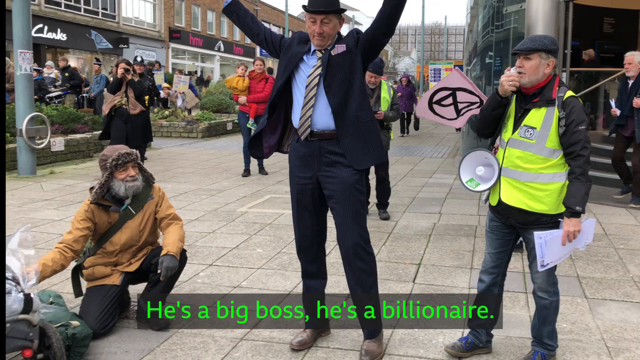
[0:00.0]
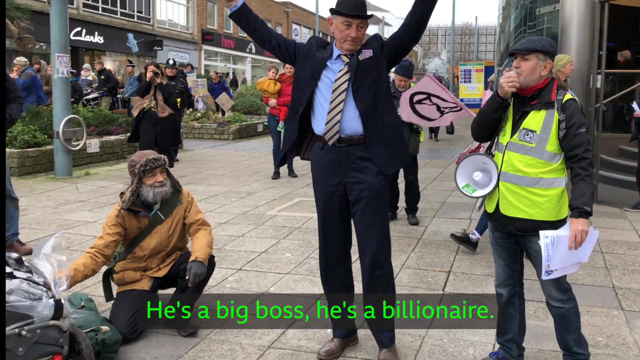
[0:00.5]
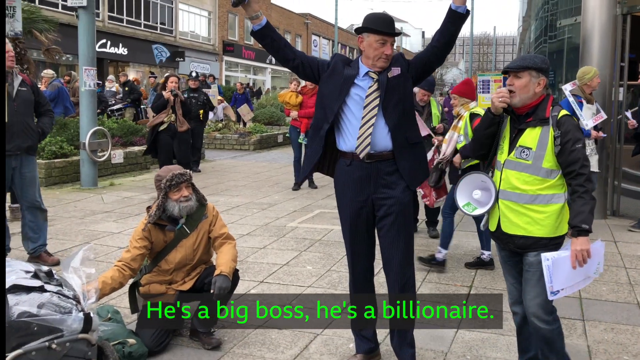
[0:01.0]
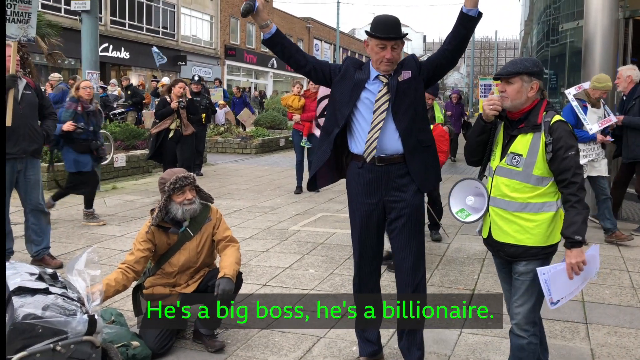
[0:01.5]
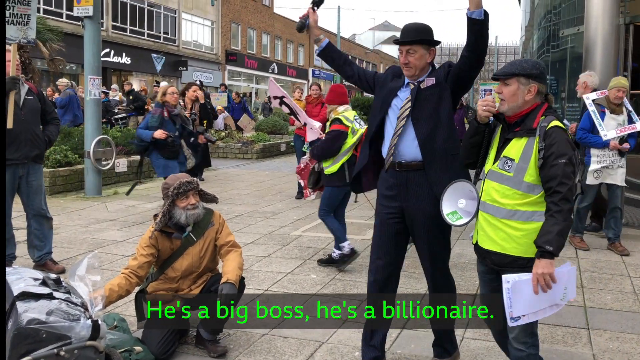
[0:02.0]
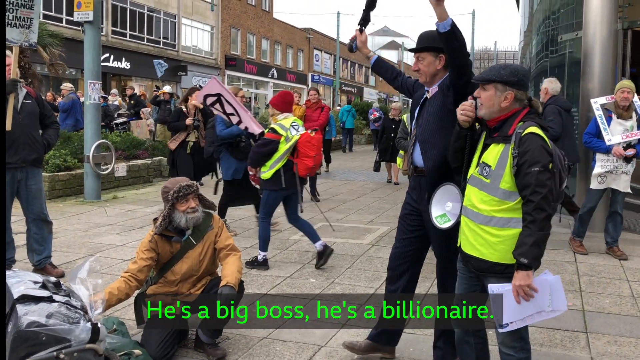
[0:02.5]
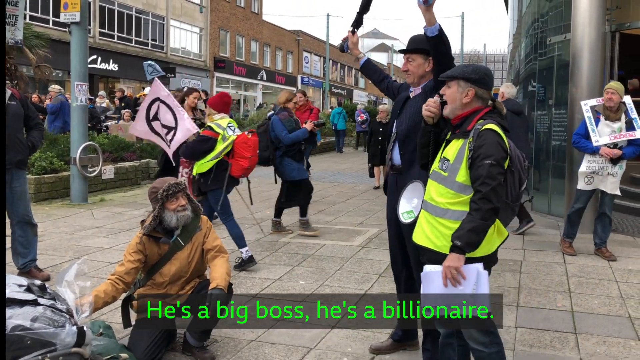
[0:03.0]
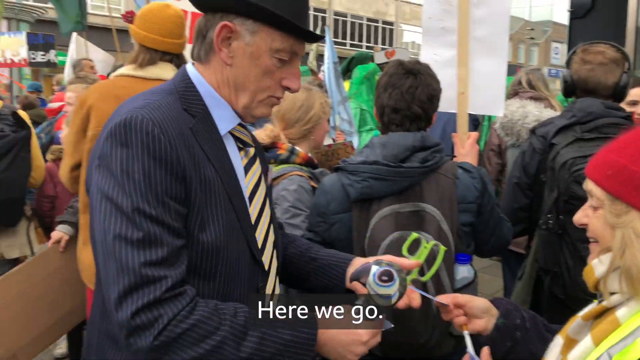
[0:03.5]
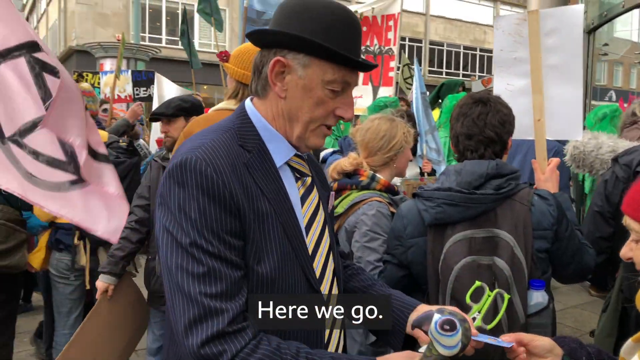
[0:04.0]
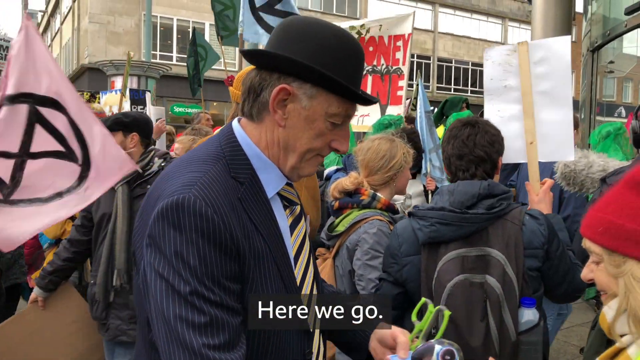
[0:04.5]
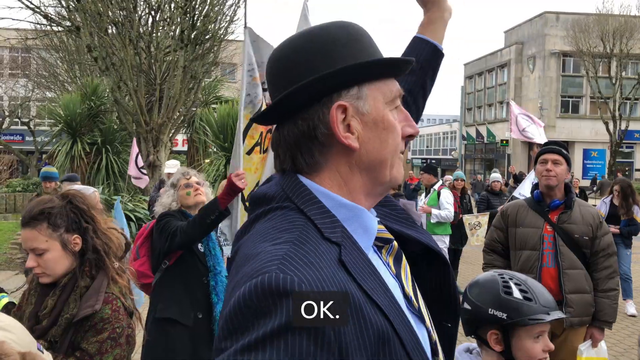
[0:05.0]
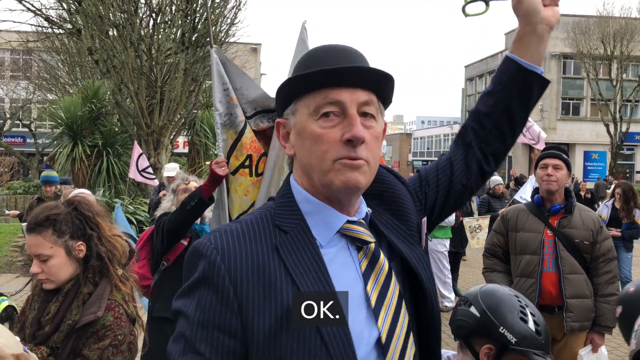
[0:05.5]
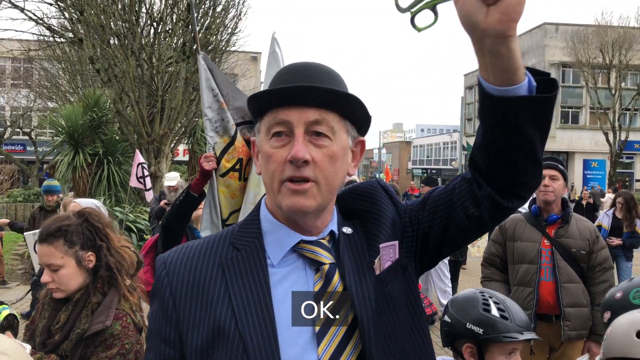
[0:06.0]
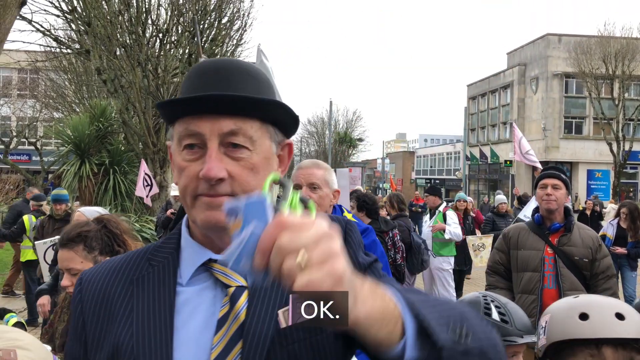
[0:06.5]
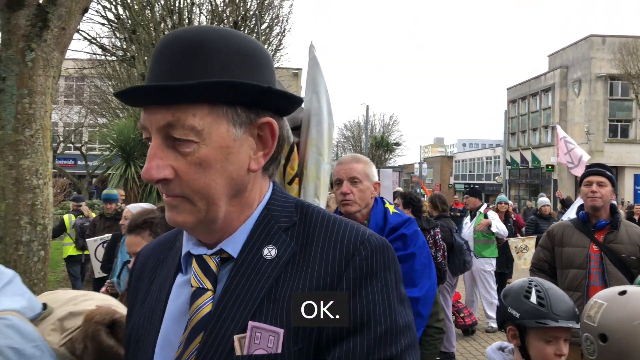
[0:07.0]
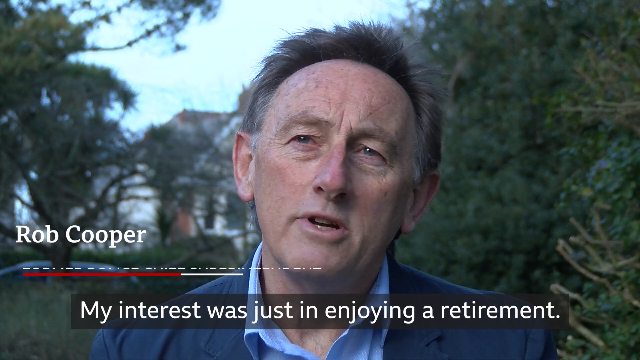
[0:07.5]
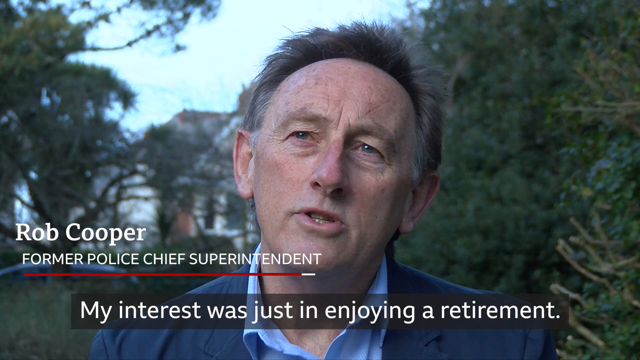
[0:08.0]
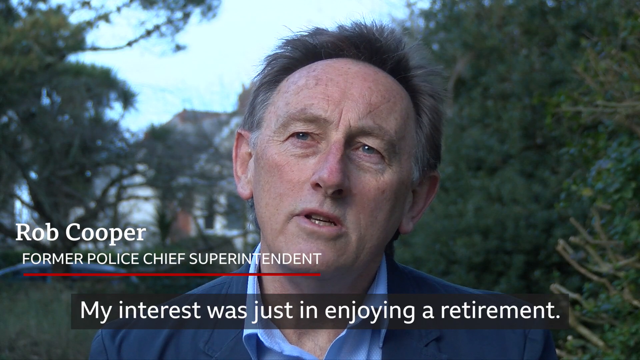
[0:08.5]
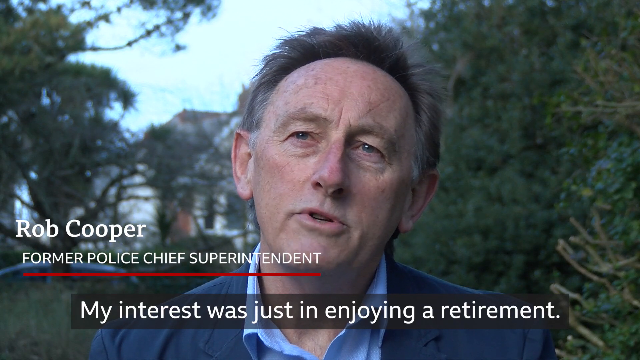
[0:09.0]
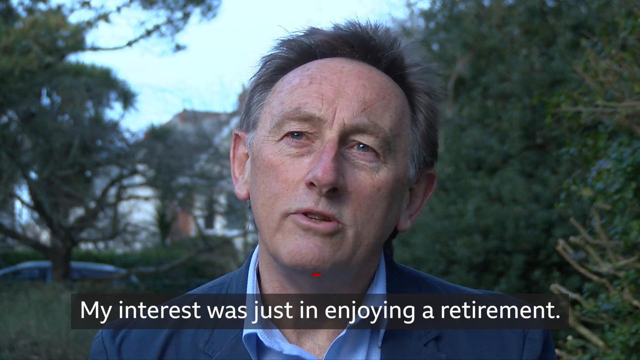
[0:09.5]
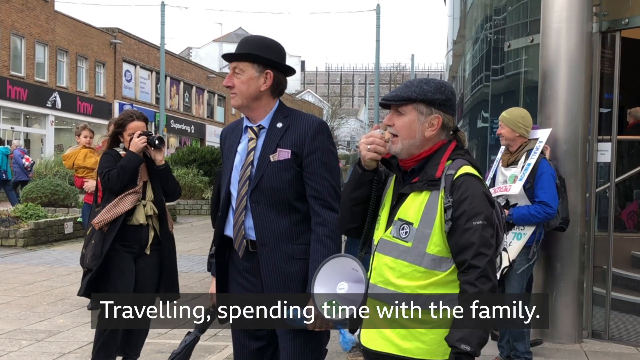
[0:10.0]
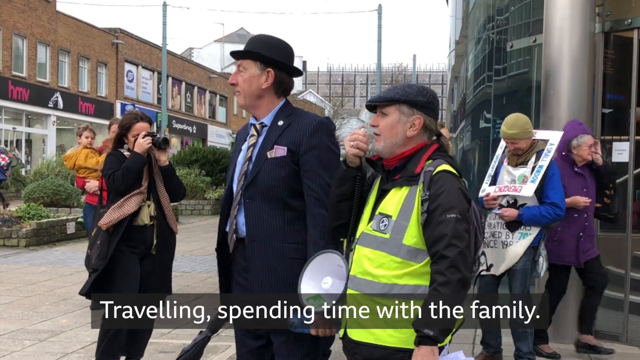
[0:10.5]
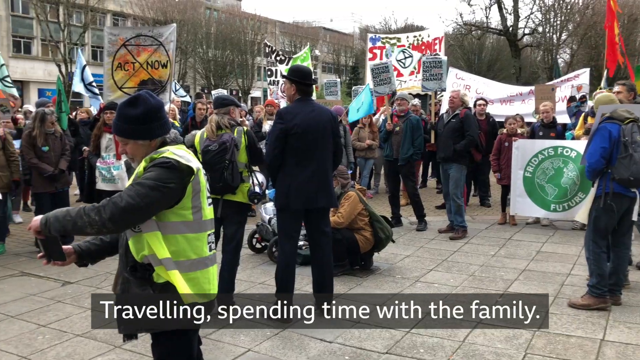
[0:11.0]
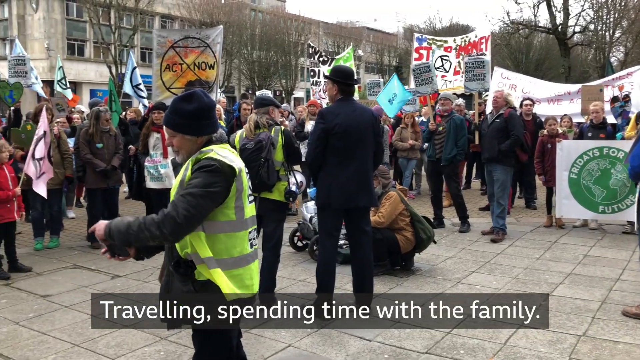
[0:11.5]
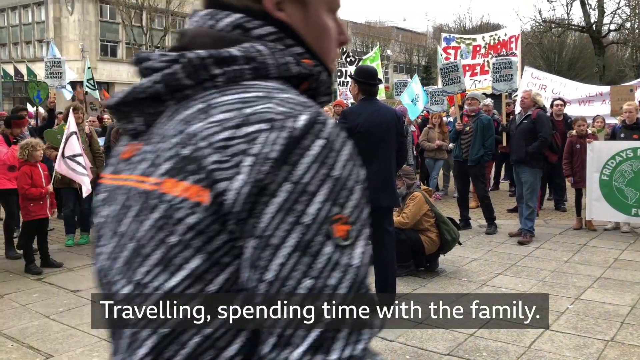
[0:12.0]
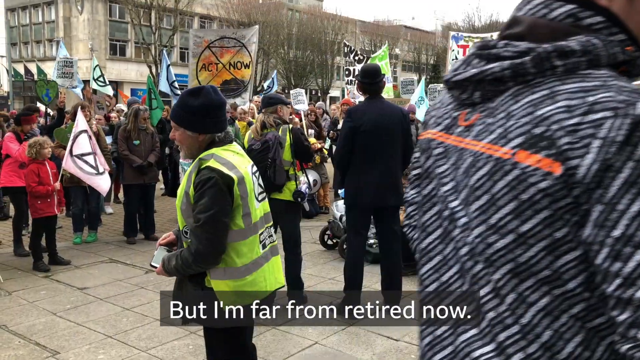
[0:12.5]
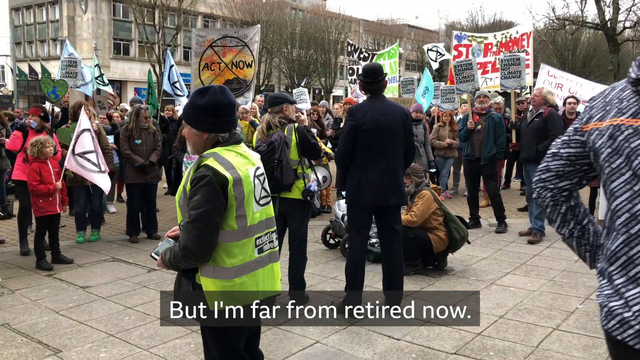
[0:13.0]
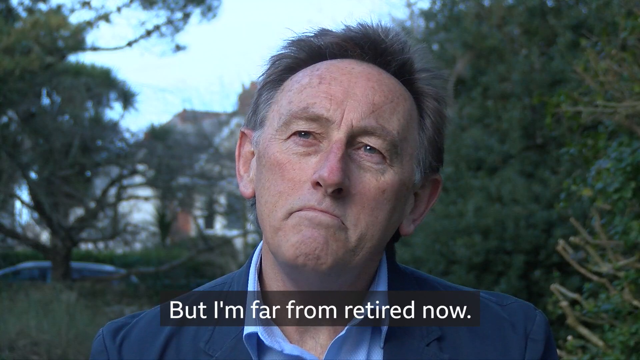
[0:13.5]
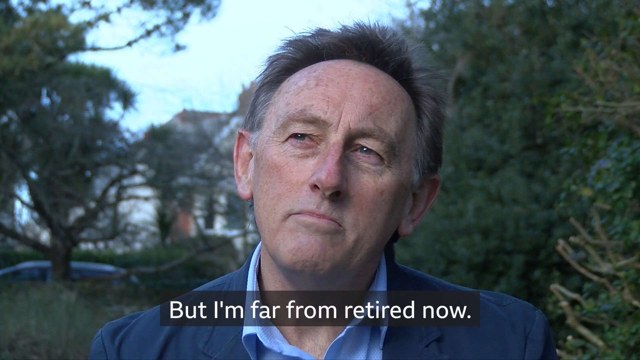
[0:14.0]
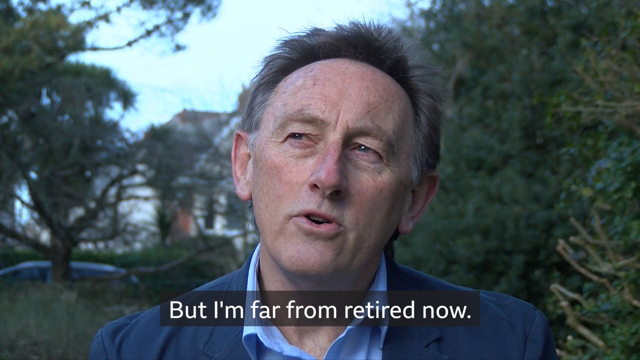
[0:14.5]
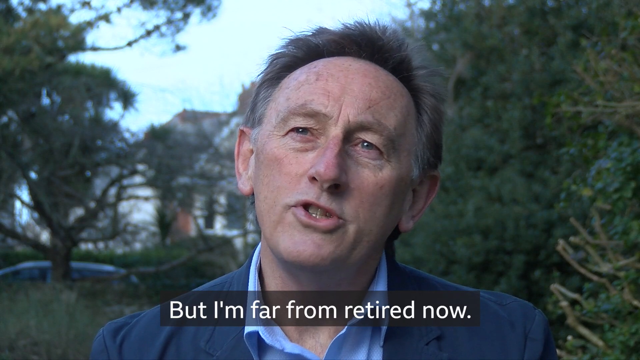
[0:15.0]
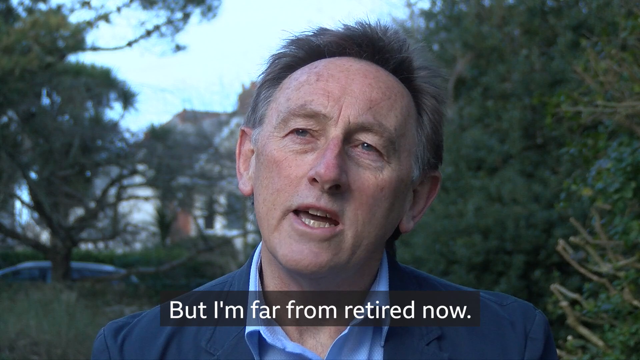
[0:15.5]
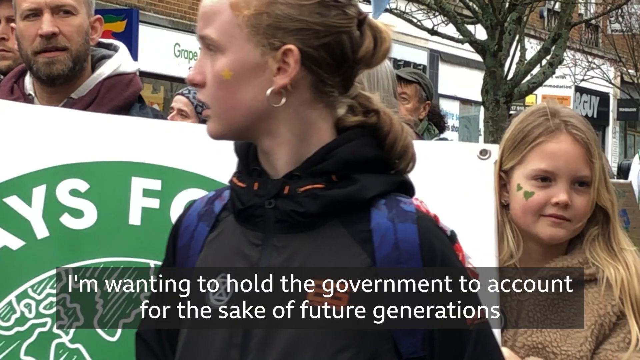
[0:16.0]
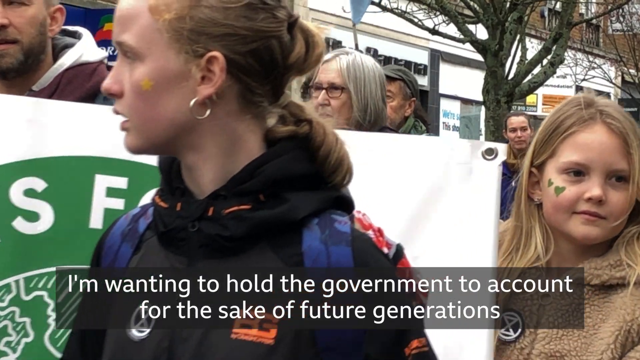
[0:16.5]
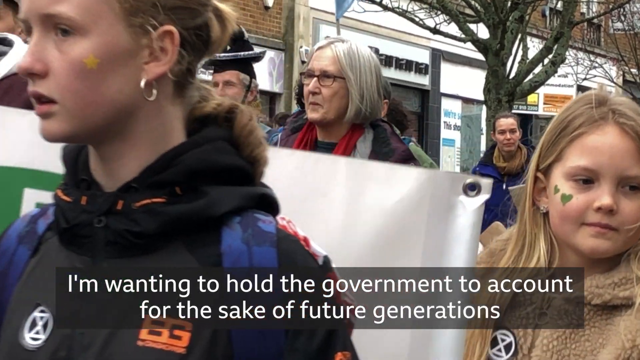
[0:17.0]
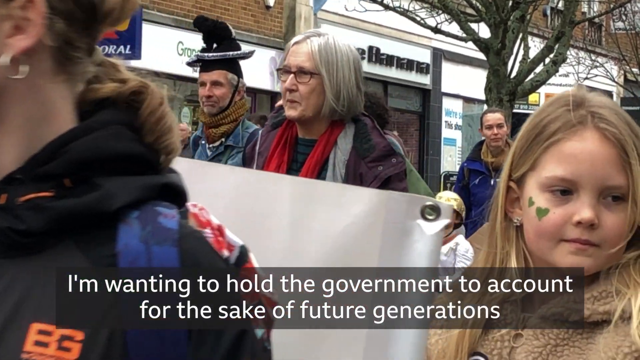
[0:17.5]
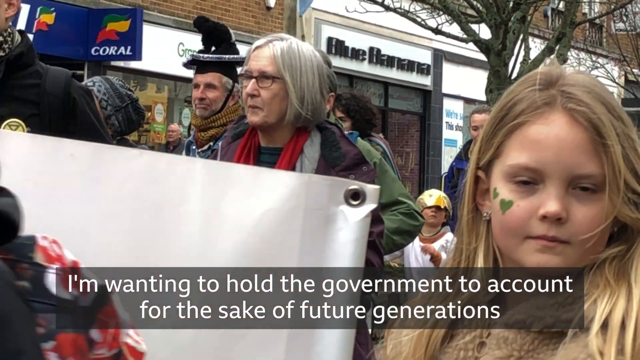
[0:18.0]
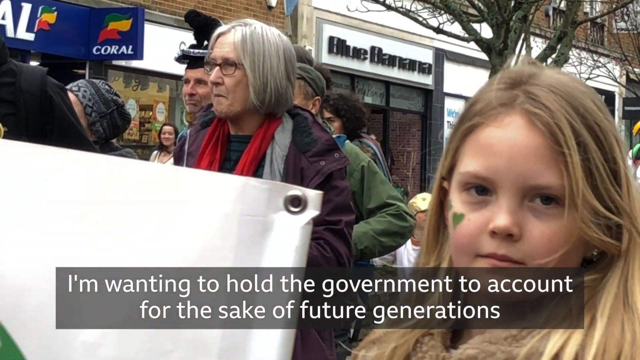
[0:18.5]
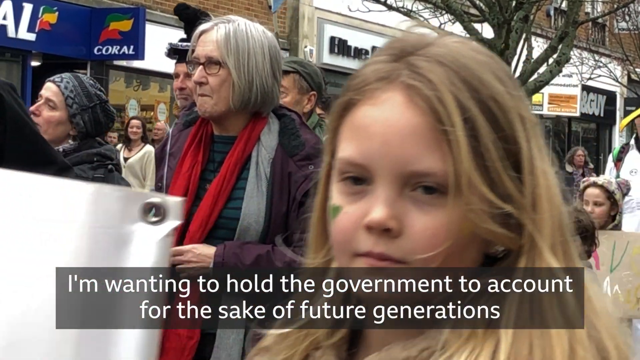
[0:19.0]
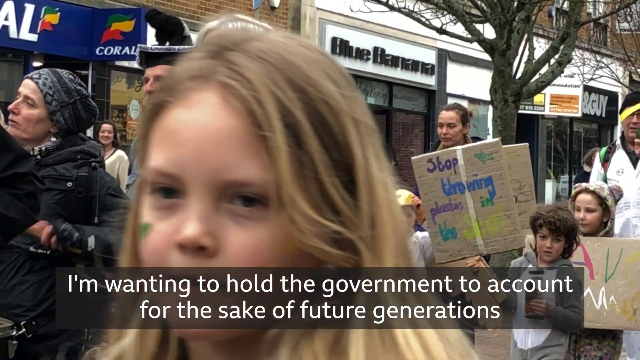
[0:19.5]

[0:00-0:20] A man stands on the pavement out on the street wearing a black jacket and pants, a blue tie and a striped shirt, with a black hat on his head and his arms raised upwards. On the pavement beside him, a man in a brown coat with a beard and a hat looks up at him. Standing beside the man with his hands raised is another man in a yellow safety vest, speaking through a megaphone. The man with his hands raised has an umbrella in his right hand. It looks like they are protesting, as some people are holding a flag and signs. The man in the hat seems to exchange something with a woman, and then he raises a pair of scissors in his hands. Next, a man speaks facing the camera; white text at the lower left of the screen names him as Rob Cooper, former police chief superintendent, and a transcription of the news story runs all across the bottom of the screen. A larger view shows the protesters standing around with signs in their hands. The retired police superintendent is seen speaking again, with trees in the background behind him. The protesters appear once more, including a little girl at the right side of the frame with two heart-shaped paintings on her cheek.